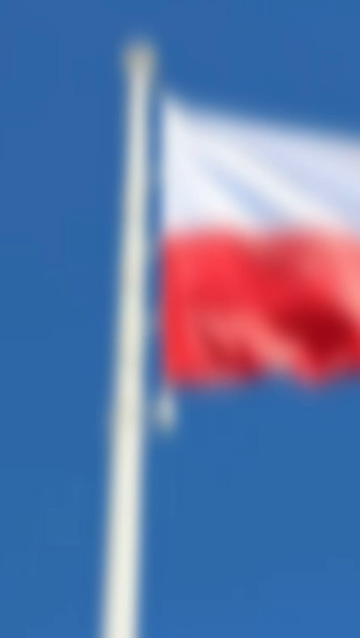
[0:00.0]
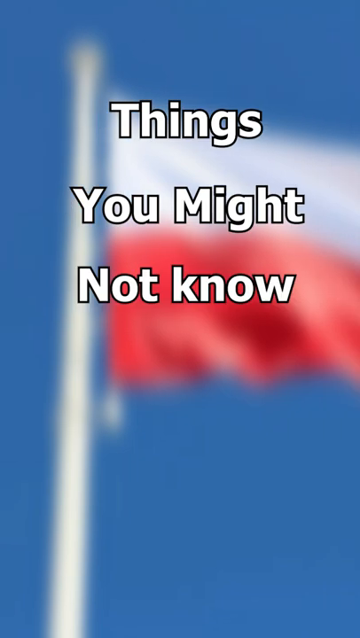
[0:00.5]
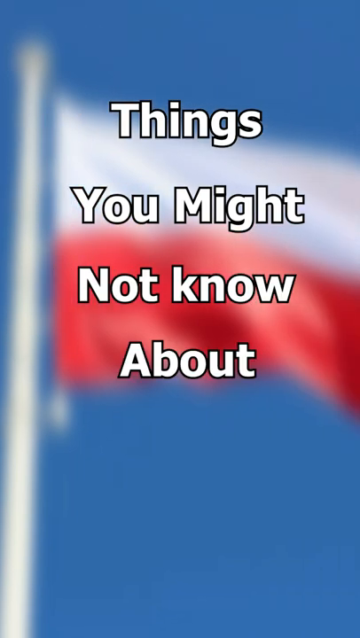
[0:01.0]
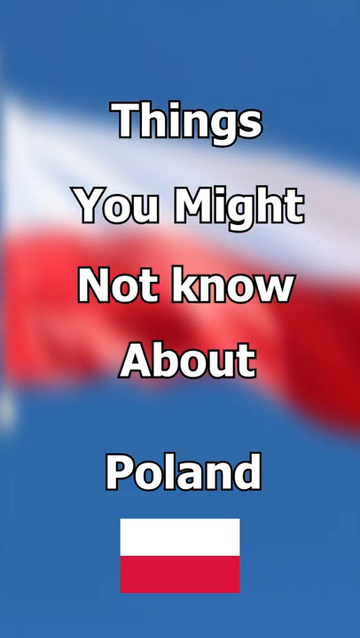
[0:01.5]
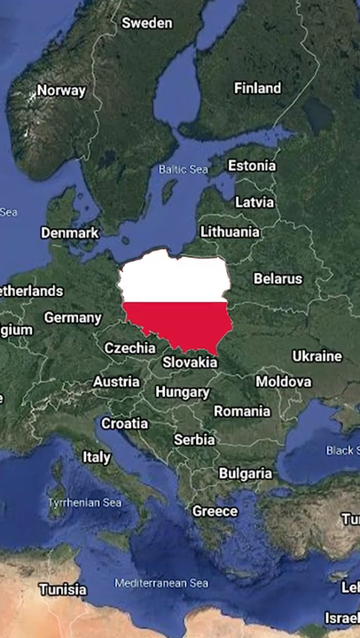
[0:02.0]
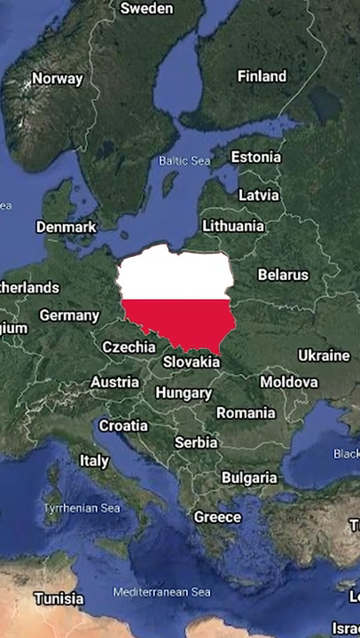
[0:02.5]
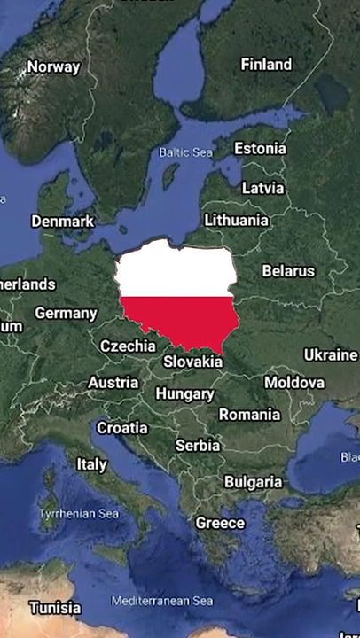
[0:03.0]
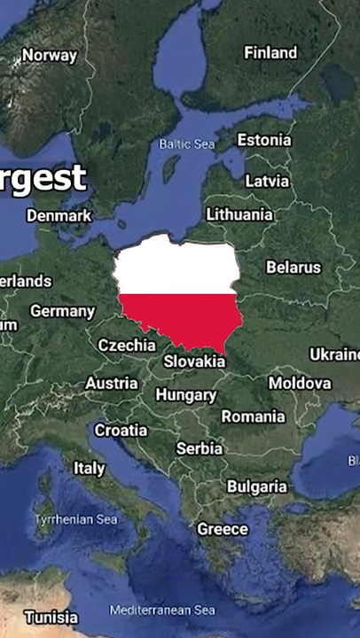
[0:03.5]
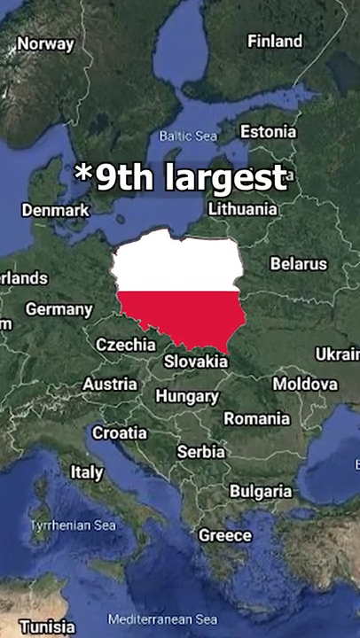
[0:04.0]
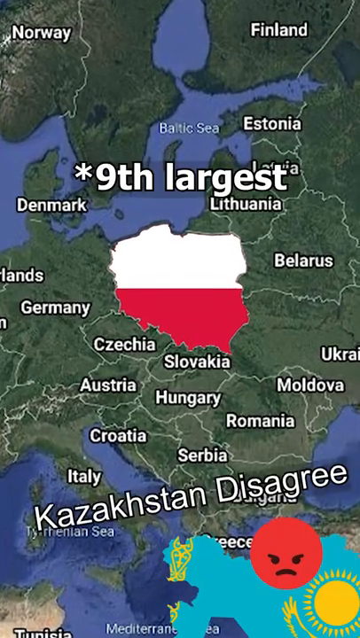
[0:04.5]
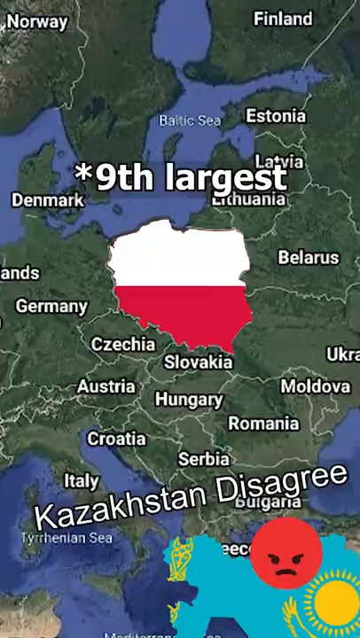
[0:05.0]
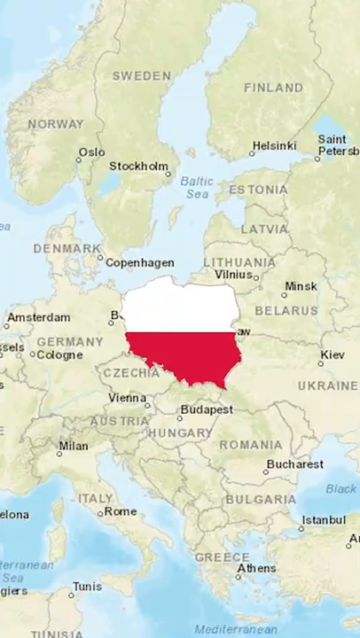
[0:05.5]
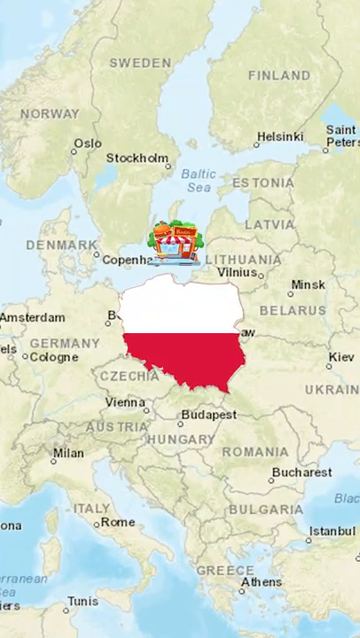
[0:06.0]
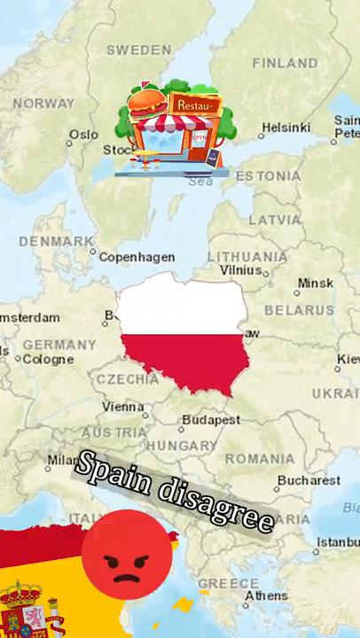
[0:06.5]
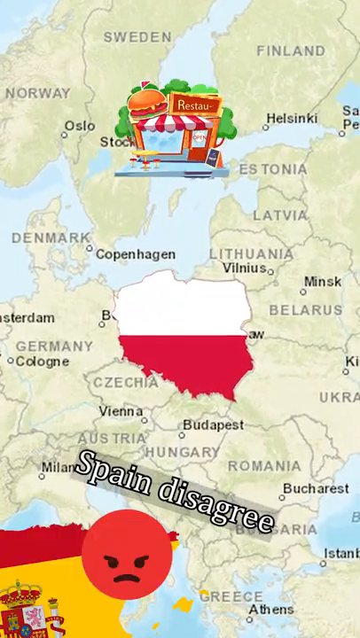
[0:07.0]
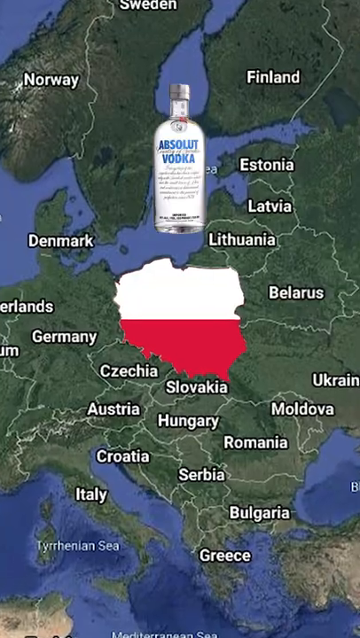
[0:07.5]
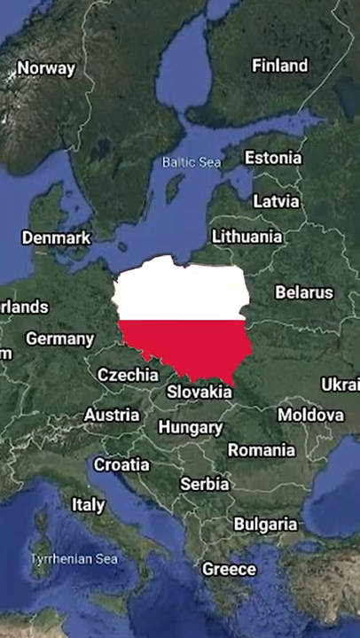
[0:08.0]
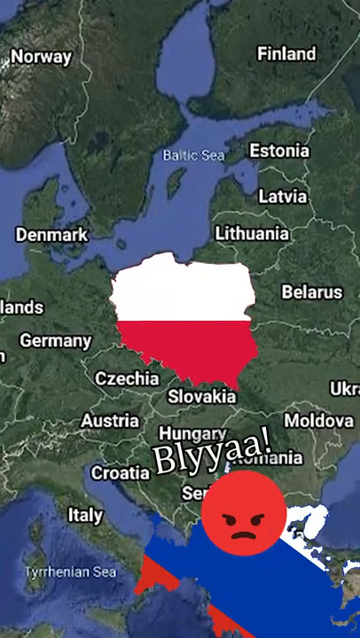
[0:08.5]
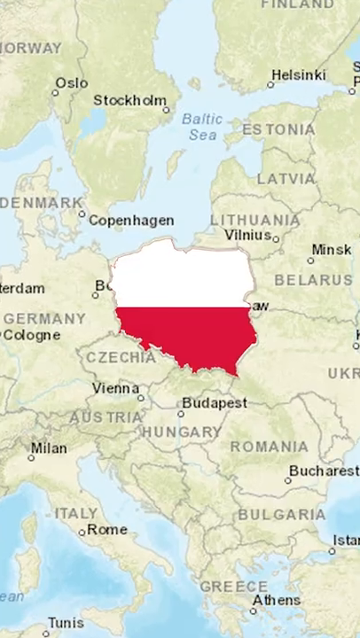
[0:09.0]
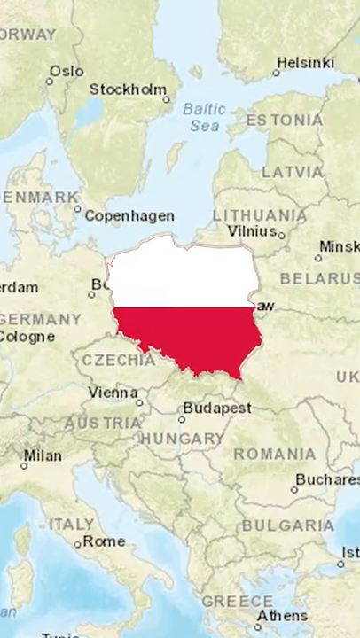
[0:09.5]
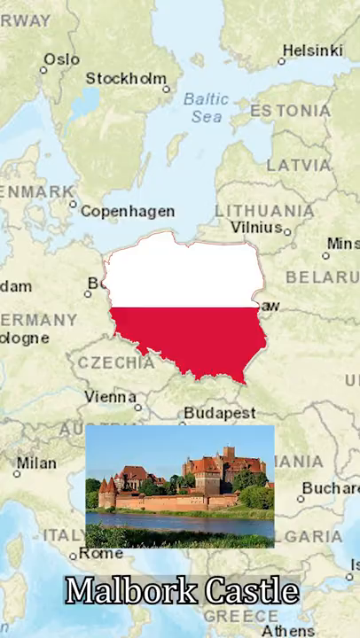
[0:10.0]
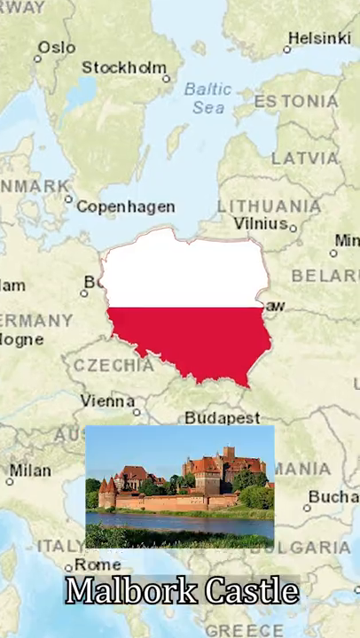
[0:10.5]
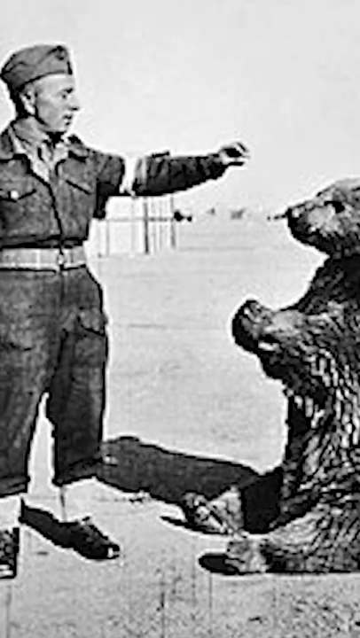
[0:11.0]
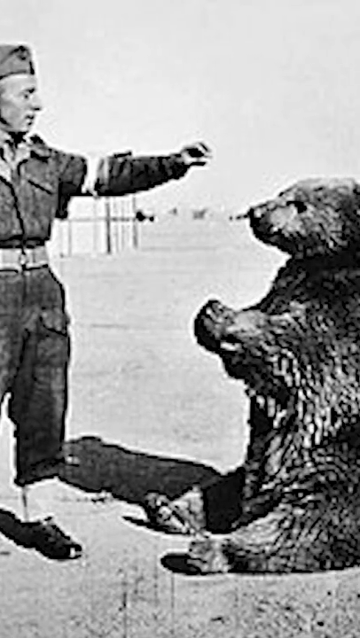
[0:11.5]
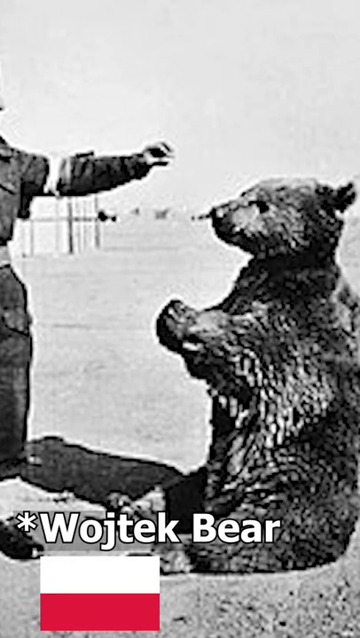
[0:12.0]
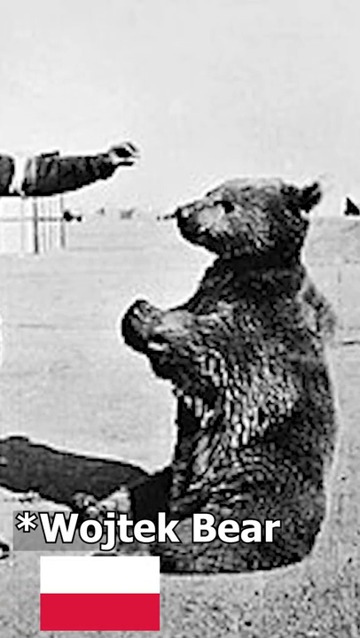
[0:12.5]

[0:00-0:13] This rapidly changing illustrated video presents an assortment of facts about the country Poland, using cartoons and little images. It opens with white text reading "things you might not know about Poland", with an out-of-focus Polish flag in the background. A rapid montage of different images follows. An image of Europe shows all of the countries labeled, mostly central Europe and the countries around Poland, such as Belarus, Ukraine, Russia, Austria, and Germany. Vodka appears at one point, as does a castle, and an old photograph of a man training a bear, which looks like it may be something from a circus. At one point the video states that Poland is the ninth largest without specifying what it refers to, possibly the ninth largest country in the world.